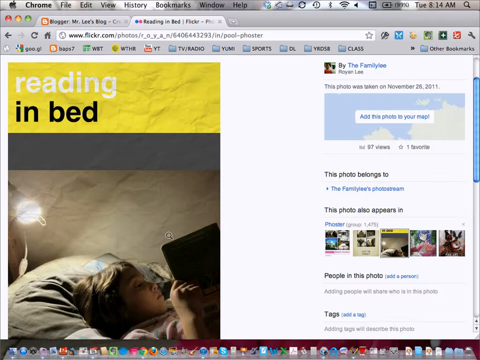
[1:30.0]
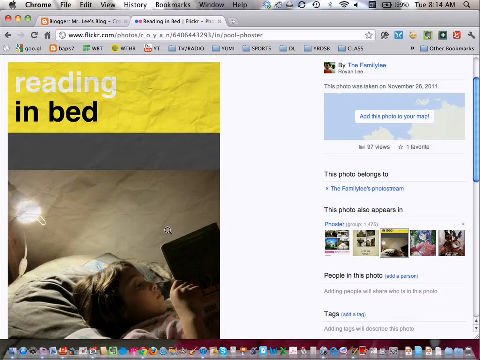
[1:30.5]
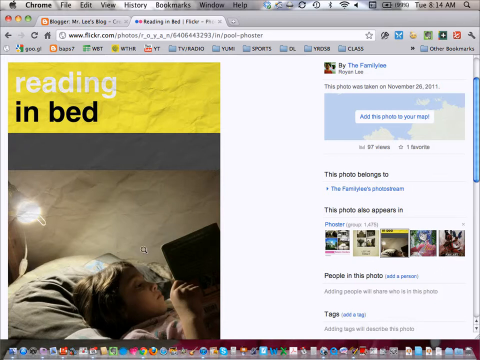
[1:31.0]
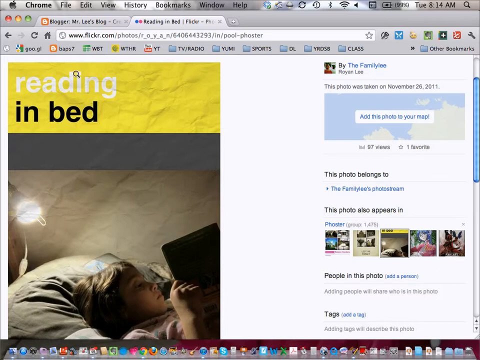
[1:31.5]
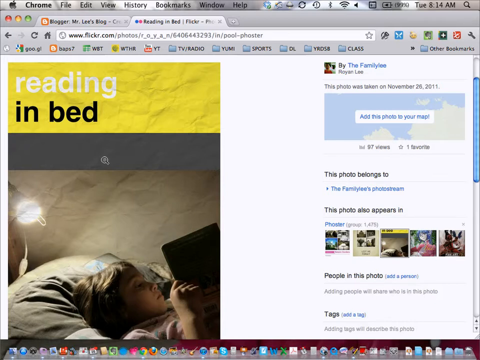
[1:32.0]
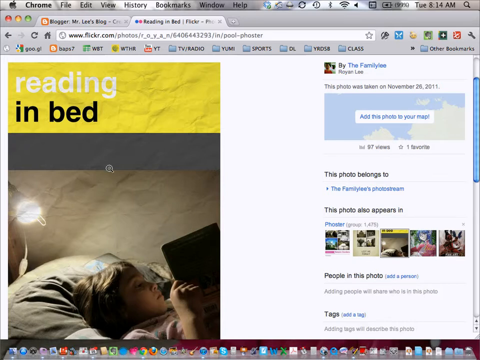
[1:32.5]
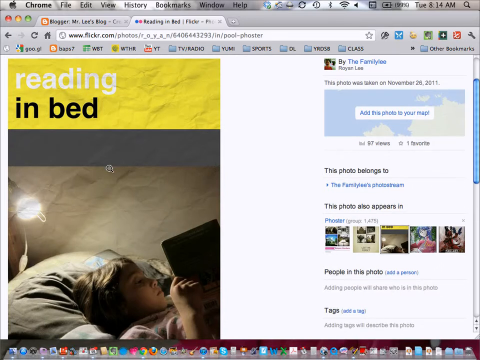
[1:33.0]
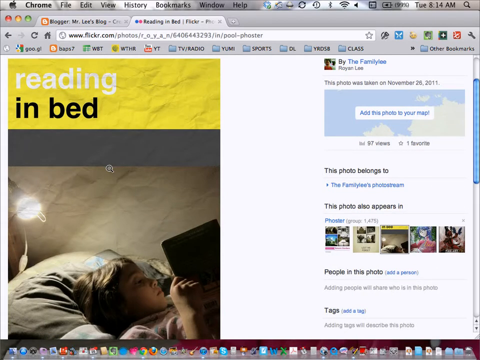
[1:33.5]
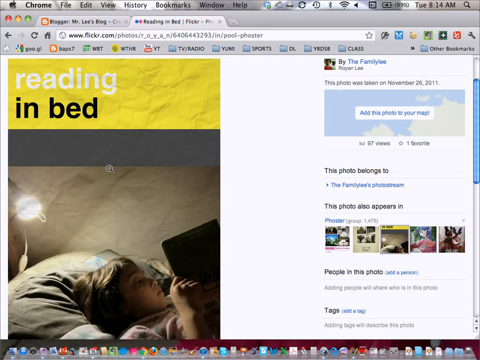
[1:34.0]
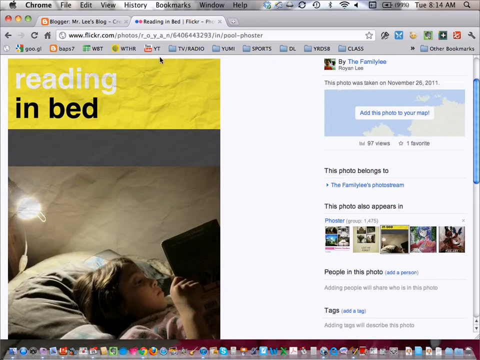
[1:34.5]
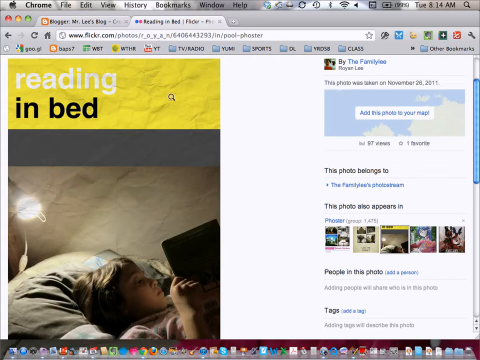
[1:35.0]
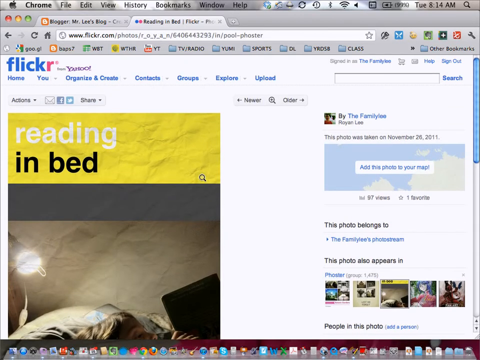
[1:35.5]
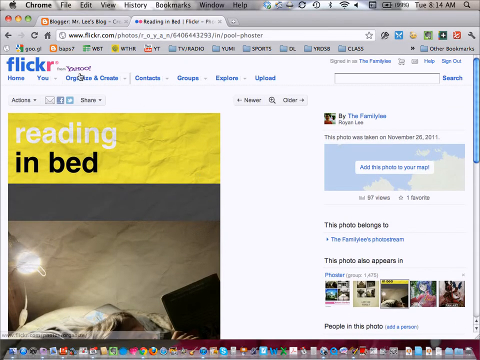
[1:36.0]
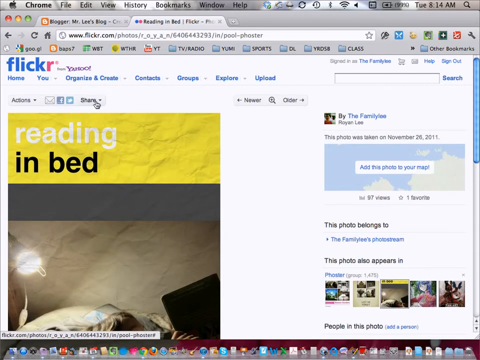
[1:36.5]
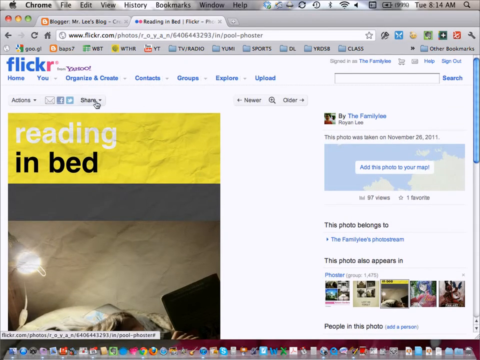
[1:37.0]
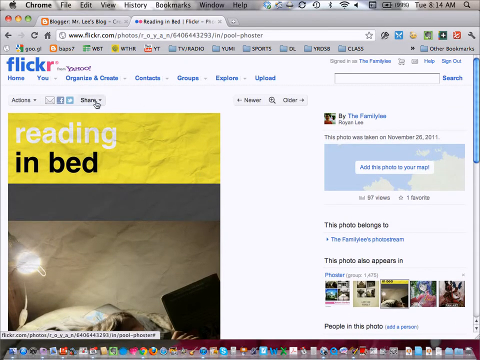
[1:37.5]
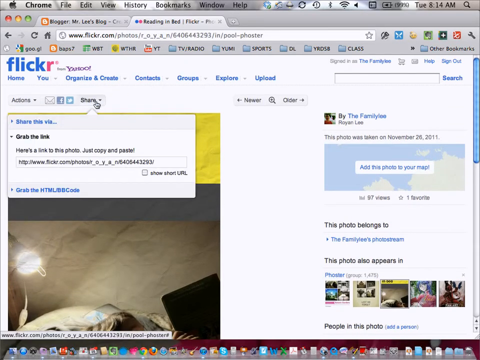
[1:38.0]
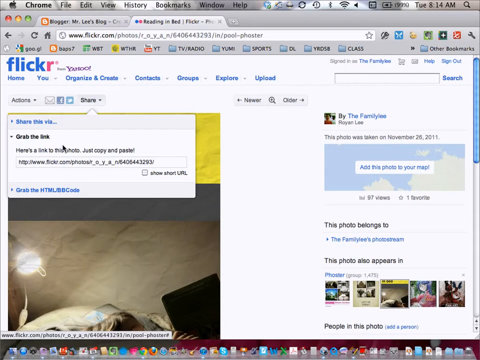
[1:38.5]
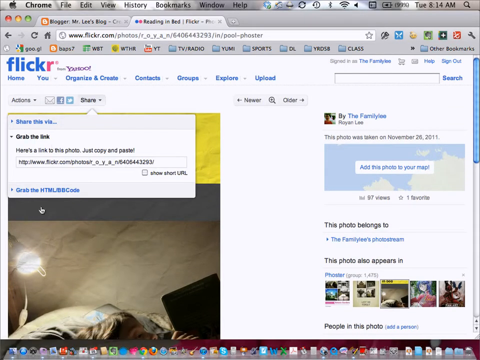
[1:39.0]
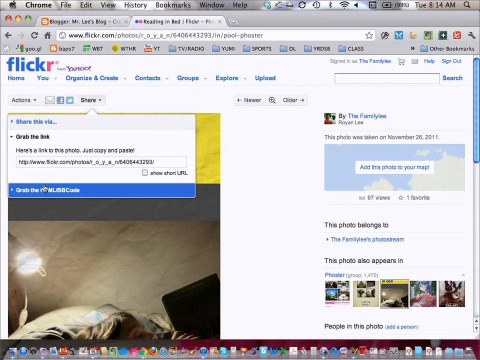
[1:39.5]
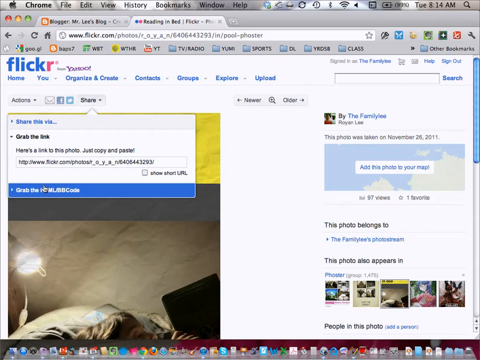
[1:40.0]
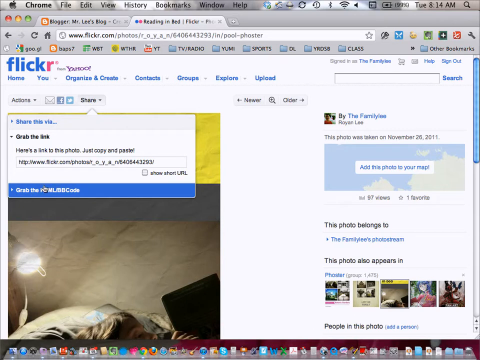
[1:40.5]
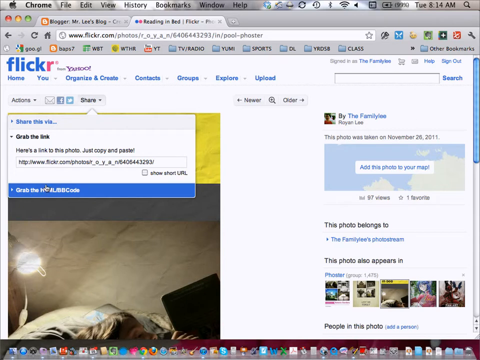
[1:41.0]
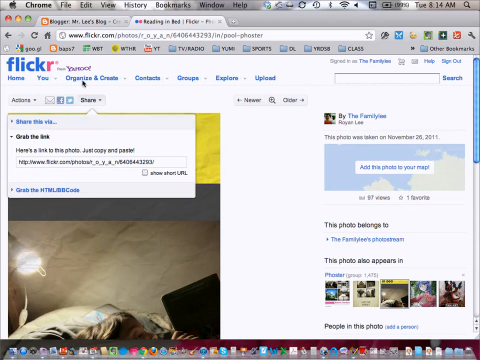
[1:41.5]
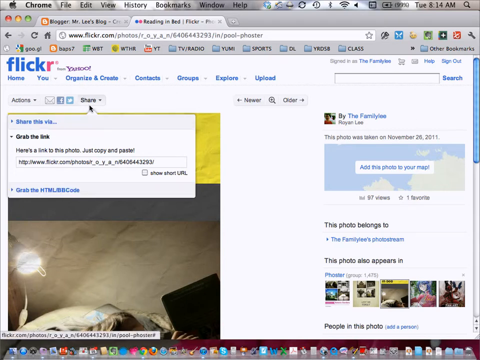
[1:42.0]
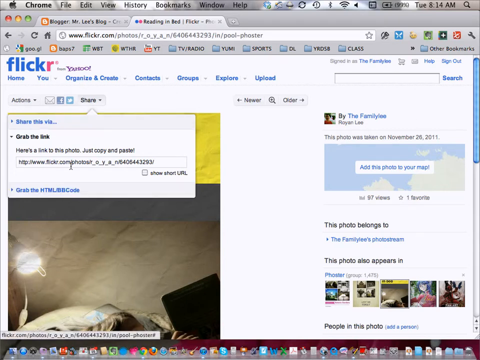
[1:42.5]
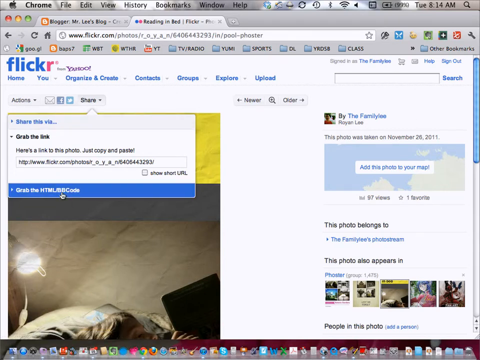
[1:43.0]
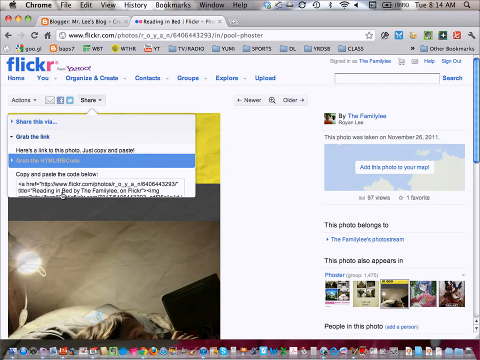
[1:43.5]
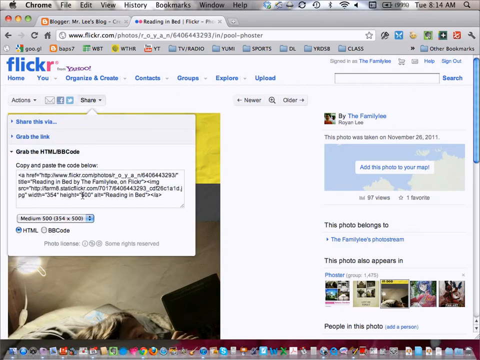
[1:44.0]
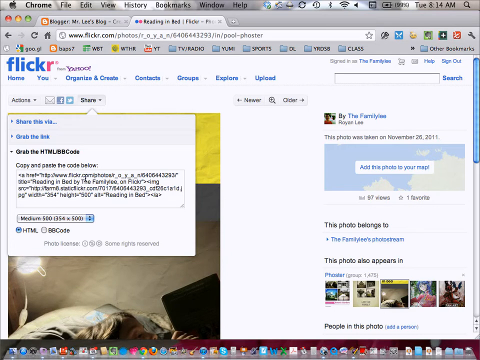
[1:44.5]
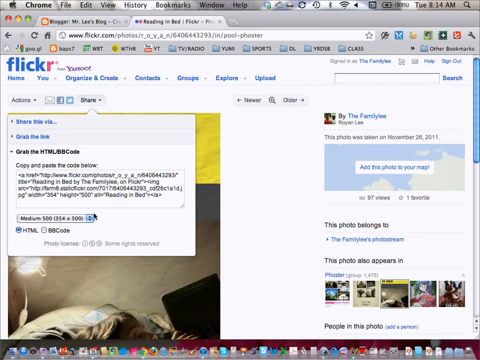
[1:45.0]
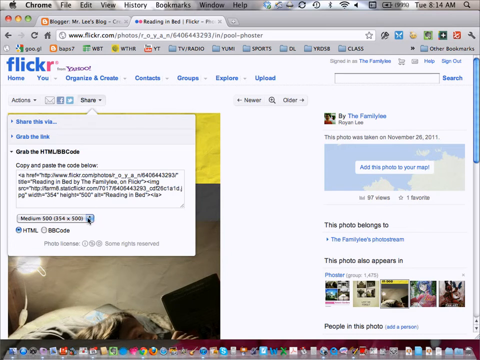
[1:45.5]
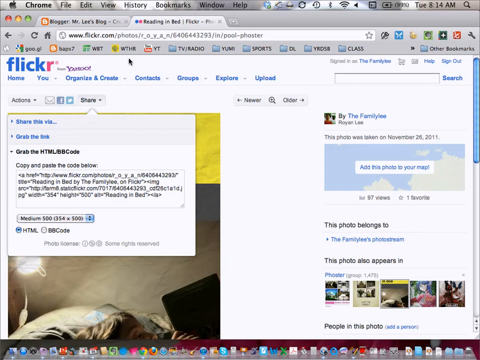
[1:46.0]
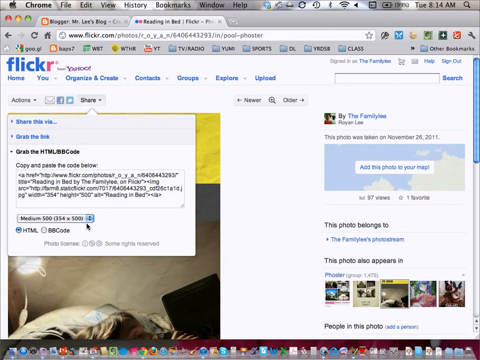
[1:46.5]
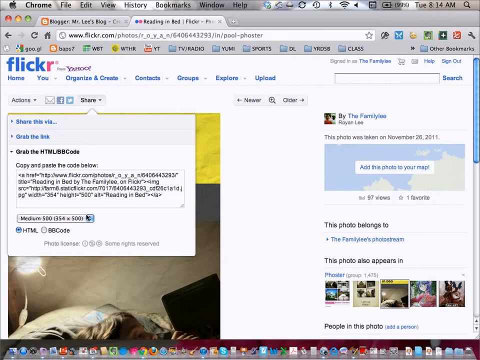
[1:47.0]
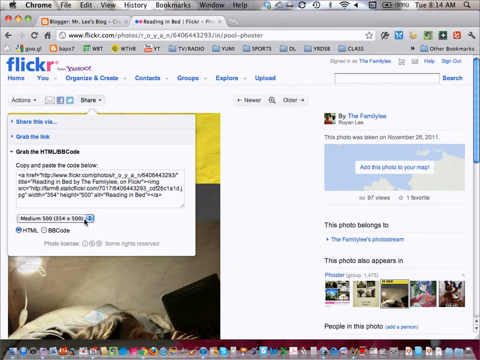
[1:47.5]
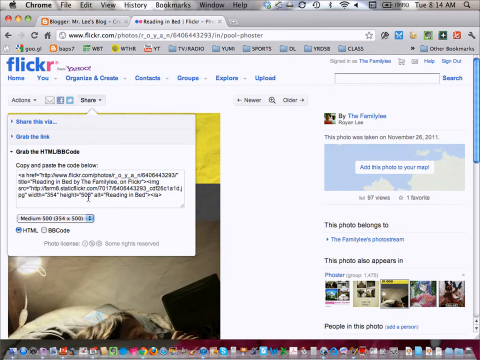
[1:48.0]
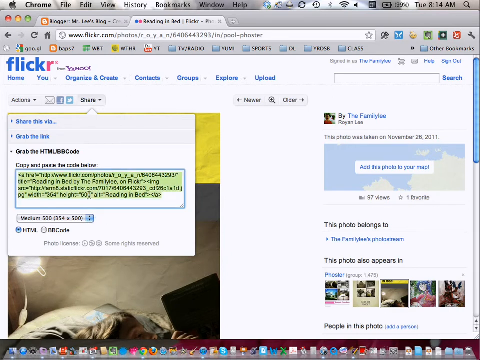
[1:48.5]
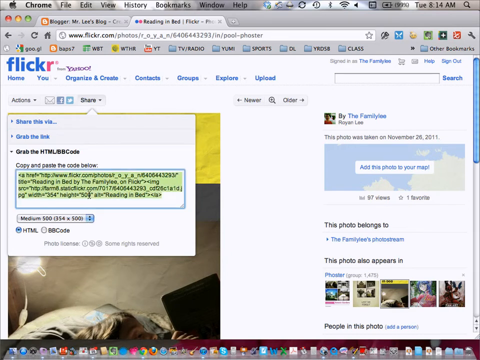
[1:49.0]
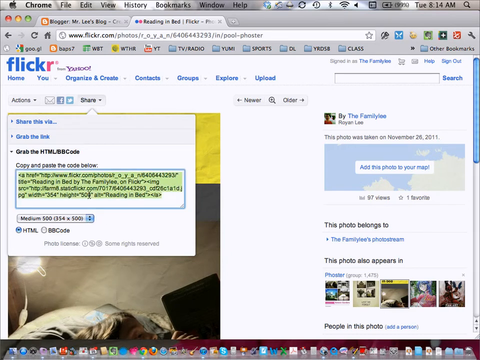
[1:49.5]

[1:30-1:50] The cursor hovers over the image on the left-hand side of the screen, which shows a boy in bed and the text "reading in bed." Over the picture, the cursor turns into a black magnifying glass. The user scrolls down slightly, then all the way back up to the top, and clicks a share button above the image, where a link is shown. The user hovers over an option that says "grab the html" and opens the "grab html bb code" submenu, which shows a long code in a text box. The user highlights the entire code in yellow with the mouse cursor and copies it.